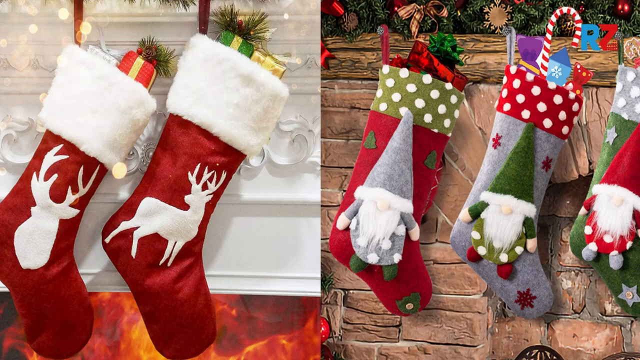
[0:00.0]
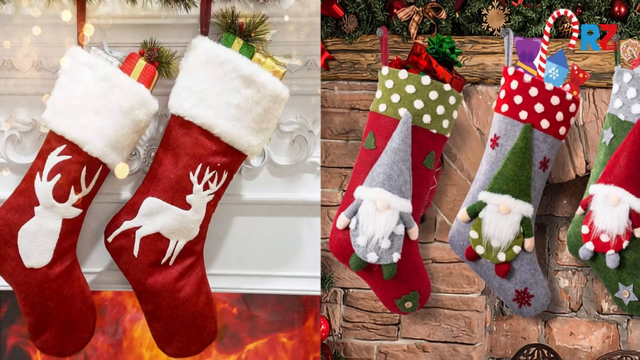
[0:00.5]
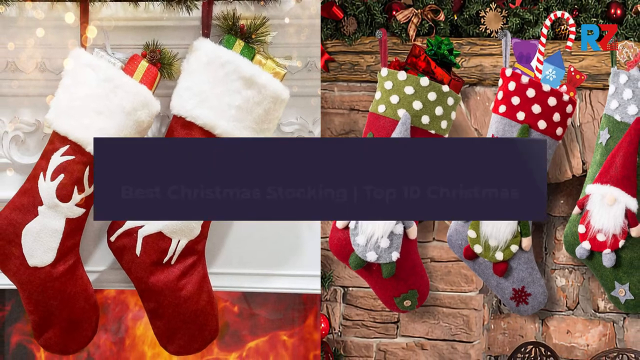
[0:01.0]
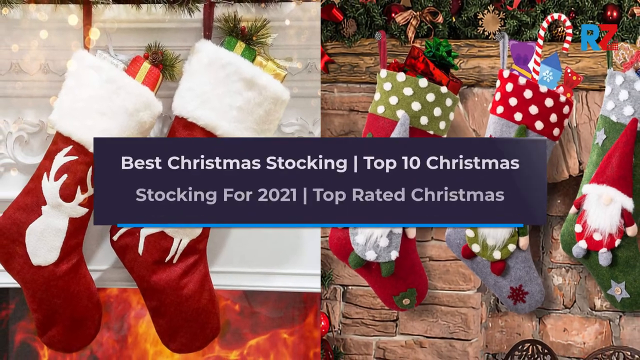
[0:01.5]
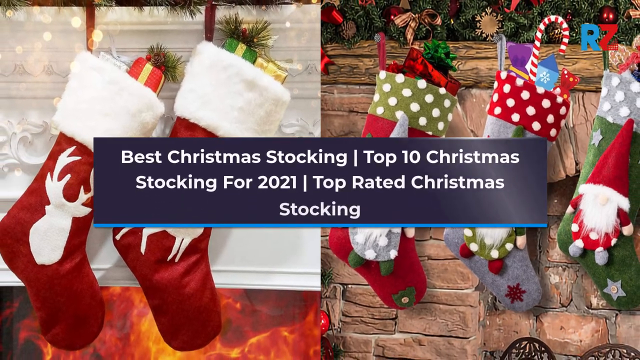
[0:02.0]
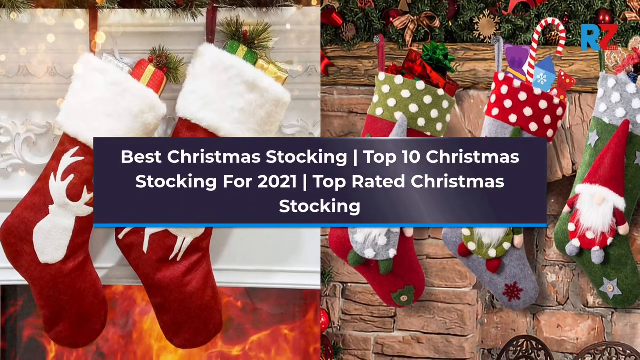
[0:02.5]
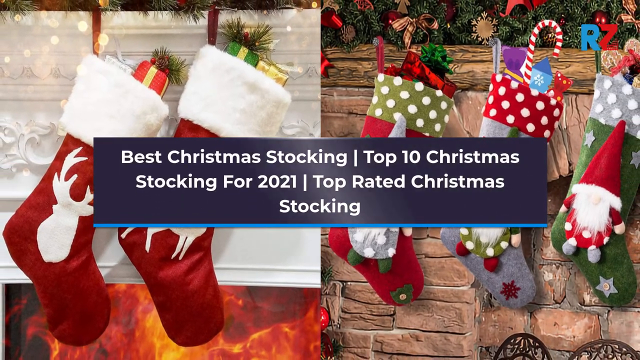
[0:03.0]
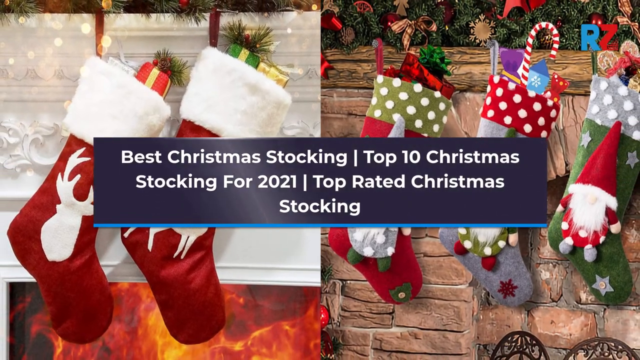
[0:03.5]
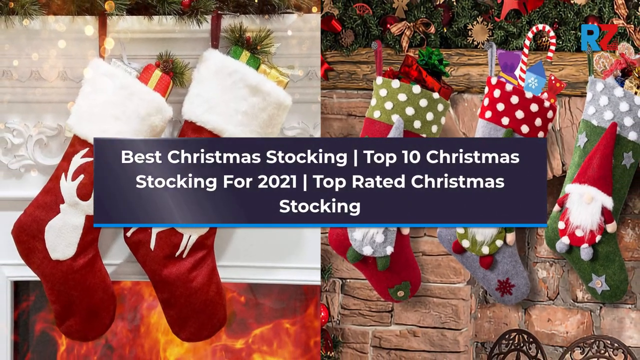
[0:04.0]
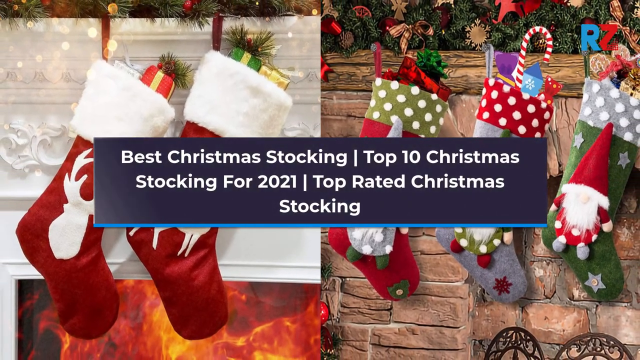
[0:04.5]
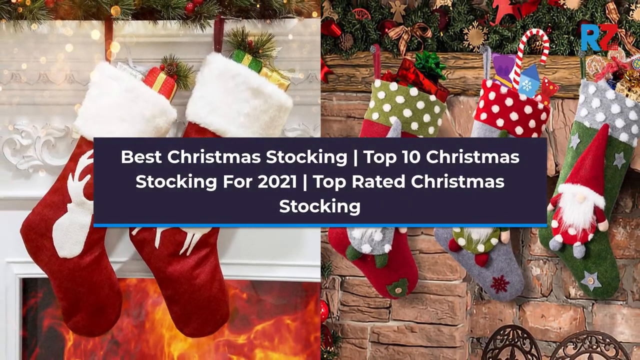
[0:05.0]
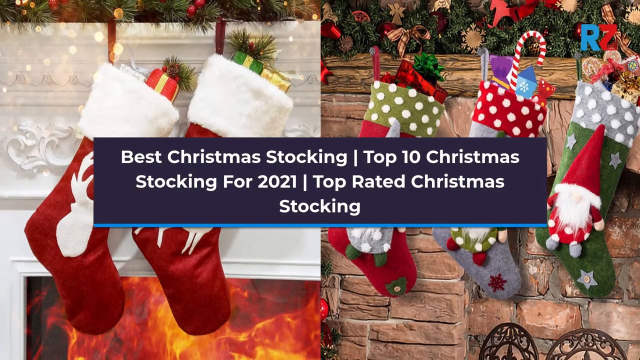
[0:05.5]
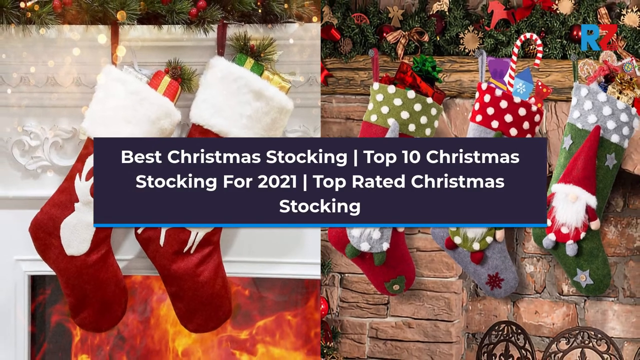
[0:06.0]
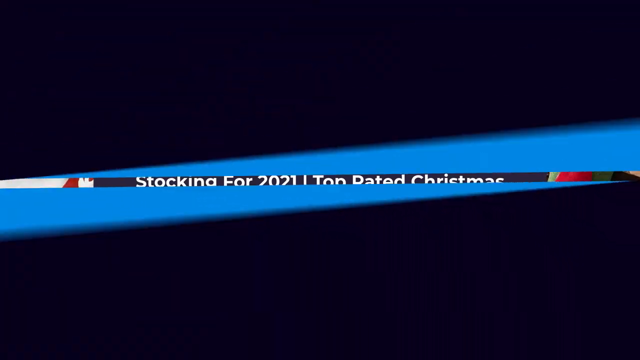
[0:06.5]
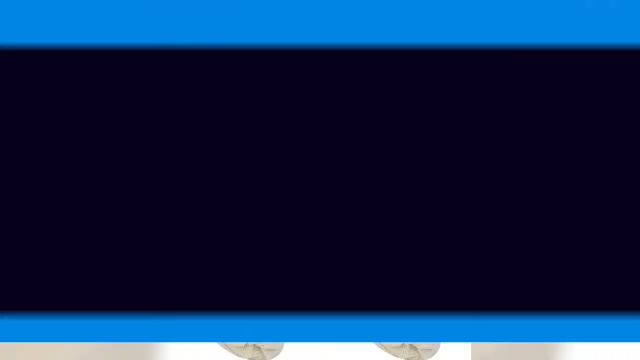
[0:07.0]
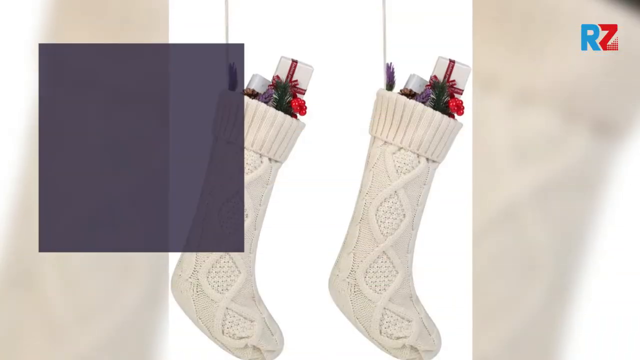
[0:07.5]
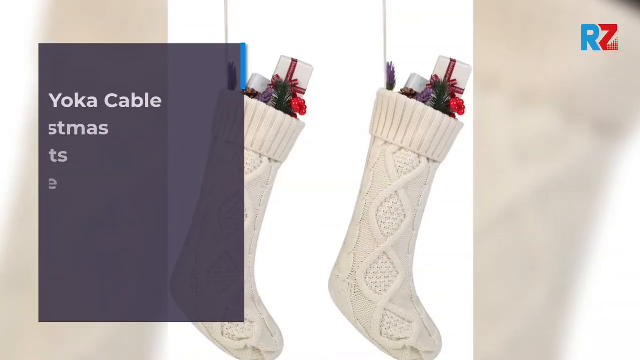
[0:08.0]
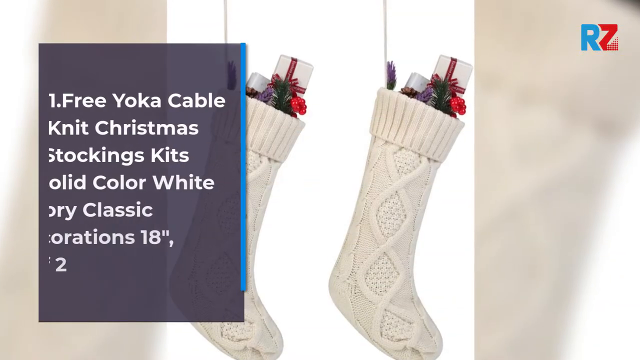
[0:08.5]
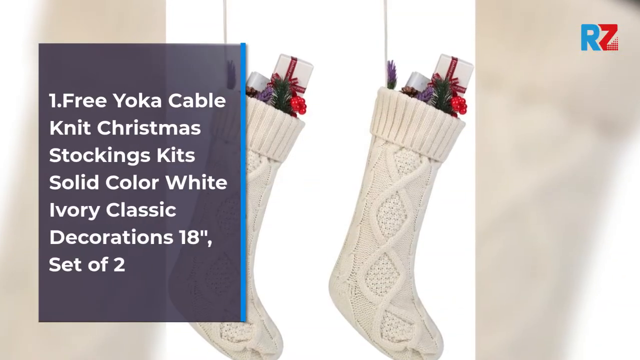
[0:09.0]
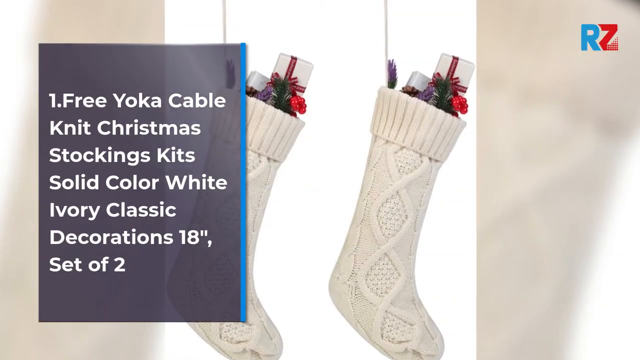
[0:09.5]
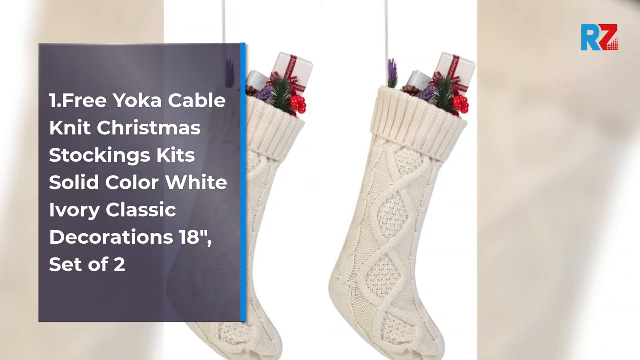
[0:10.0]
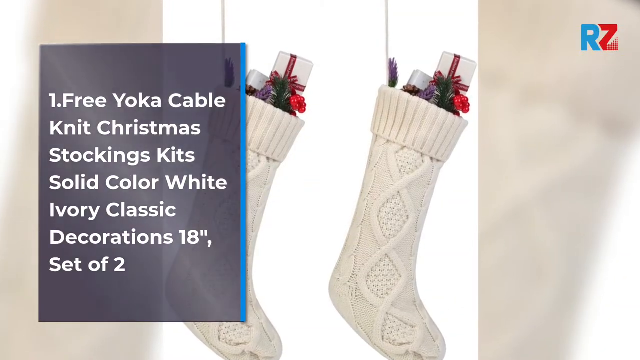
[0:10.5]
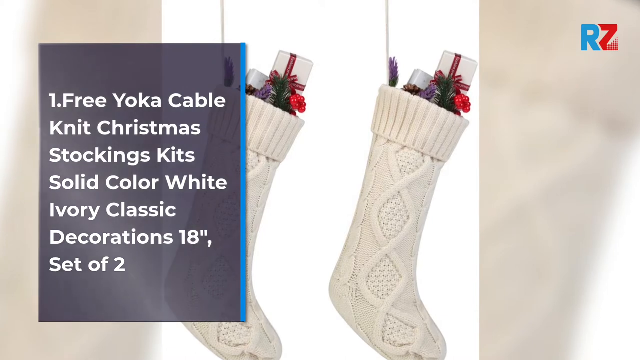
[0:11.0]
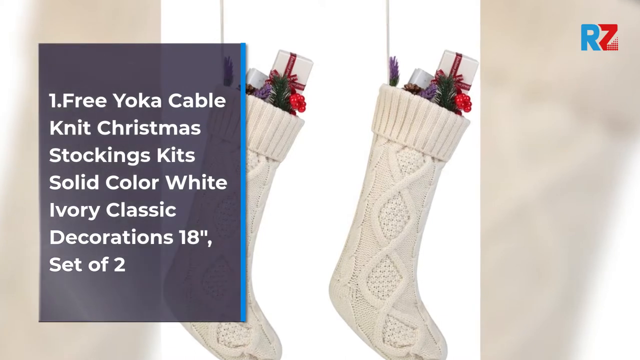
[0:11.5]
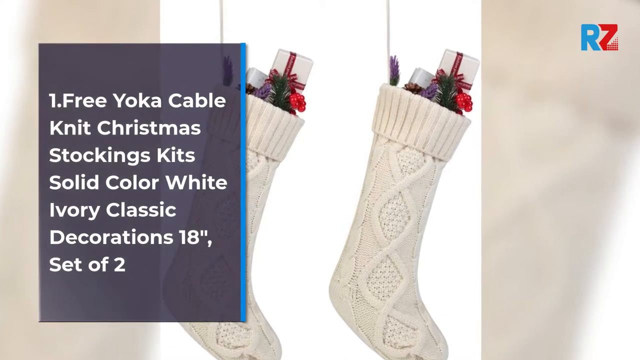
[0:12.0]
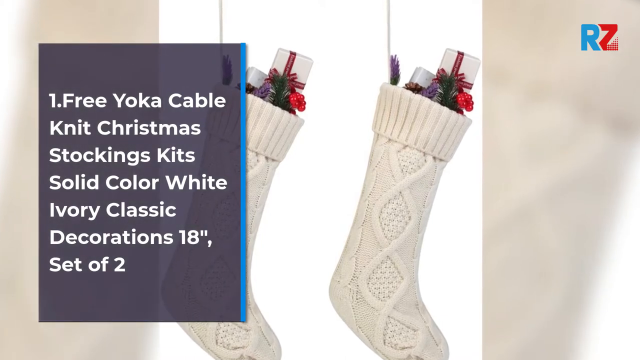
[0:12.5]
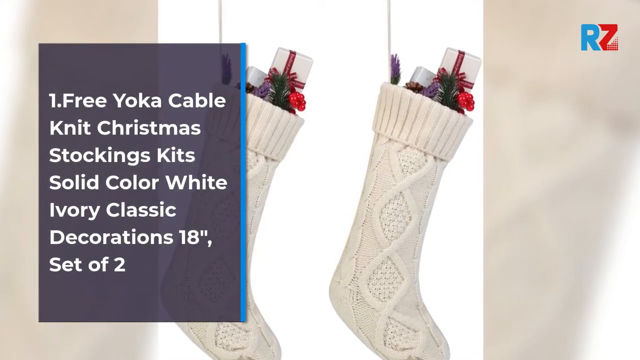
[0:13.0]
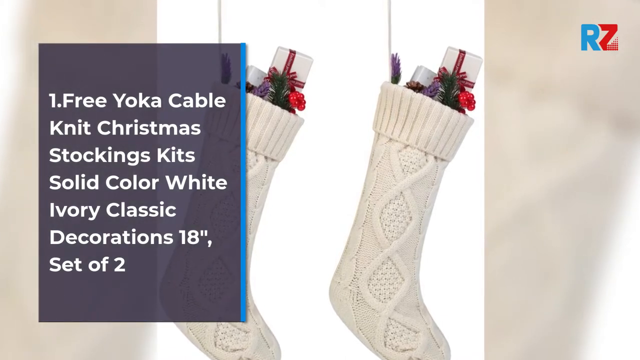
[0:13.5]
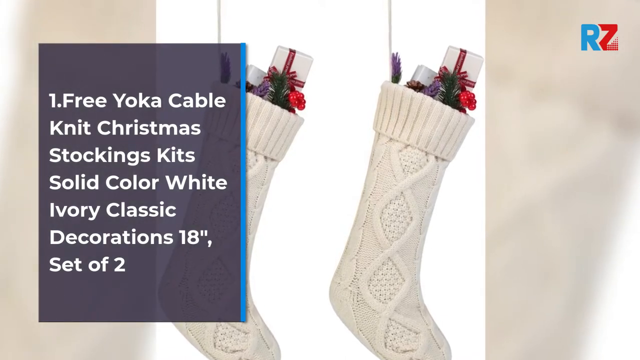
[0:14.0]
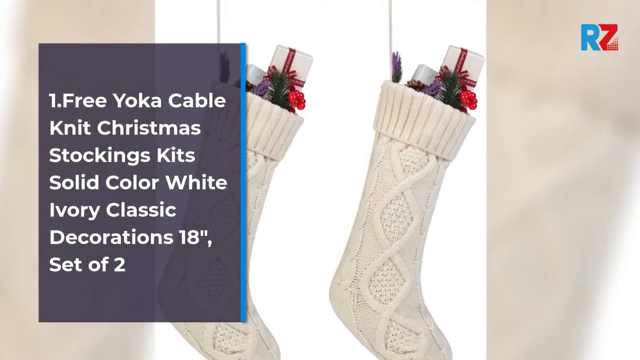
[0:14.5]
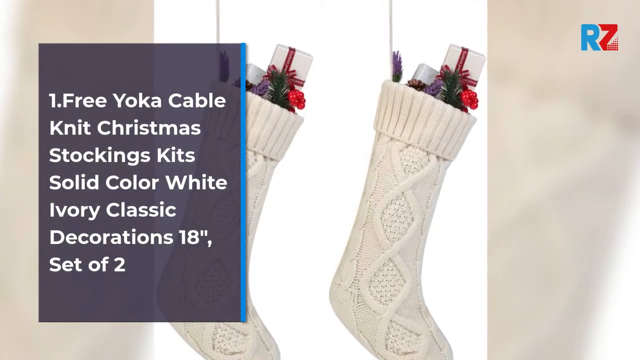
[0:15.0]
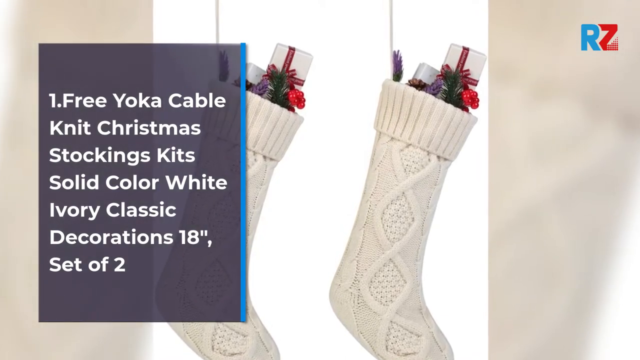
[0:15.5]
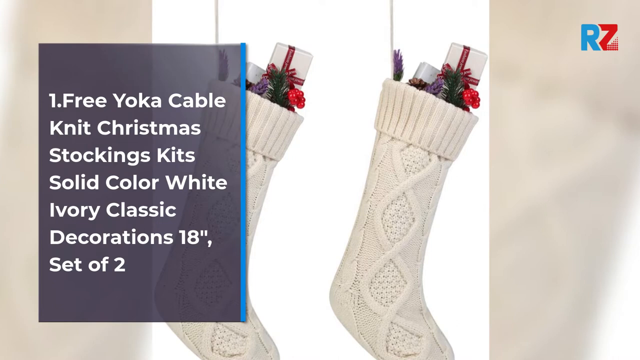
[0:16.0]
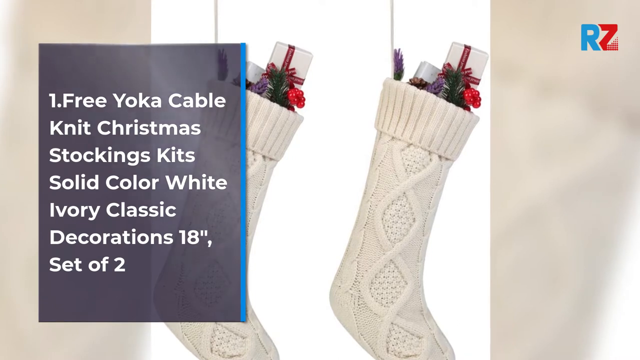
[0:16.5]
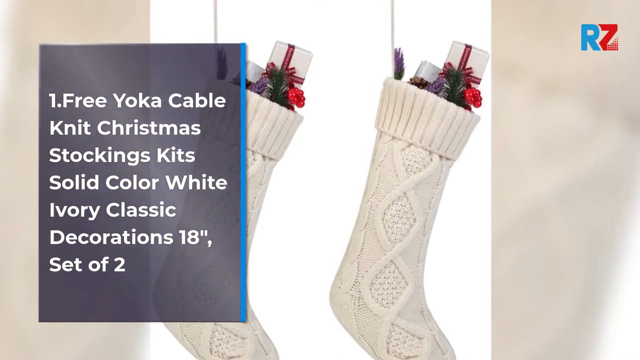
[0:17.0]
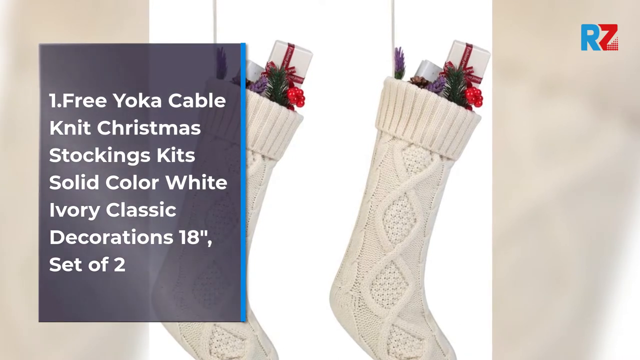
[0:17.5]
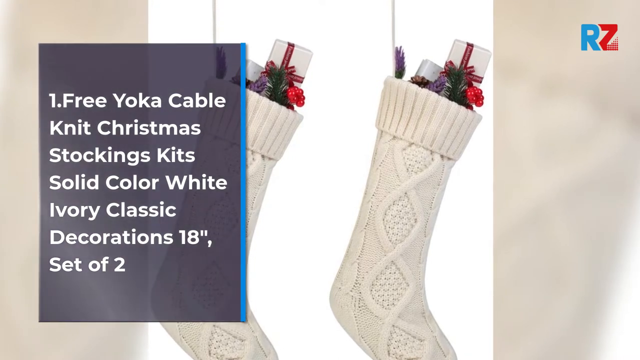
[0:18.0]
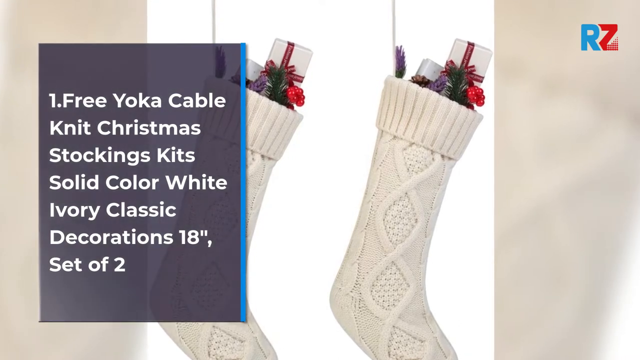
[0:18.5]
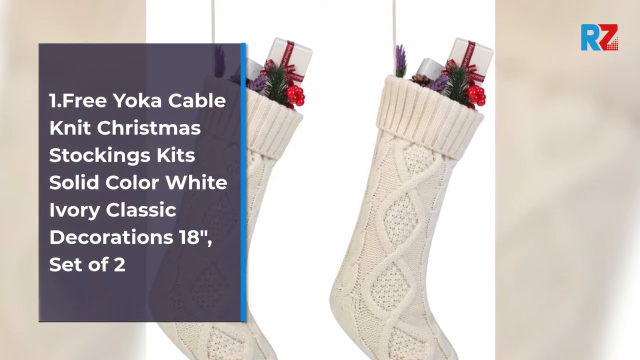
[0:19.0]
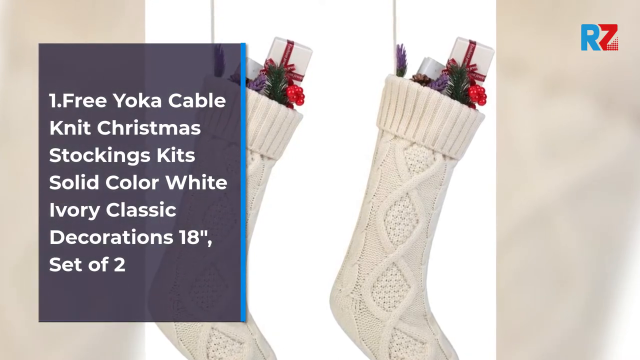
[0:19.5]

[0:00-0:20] The video is about the best Christmas stockings: the top 10 Christmas stockings for 2021, top-rated Christmas stockings. A bunch of Christmas stockings appears. On the left are red stockings with white fur and a picture of a deer, kind of like the logo of the Milwaukee Bucks NBA team. On the right are three stockings in green, gray, red and white. At the top they have polka dots, and at the bottom each has a little gnome with a long top hat, a polka-dot belly, a long beard, and little arms and legs. Number 1 is the Free Yoka Cable Knit Christmas Stocking Kits, Solid Color White Ivory Classic Decoration 18", Setup 2. There are a bunch of chocolate bars in the stockings, and presents too.